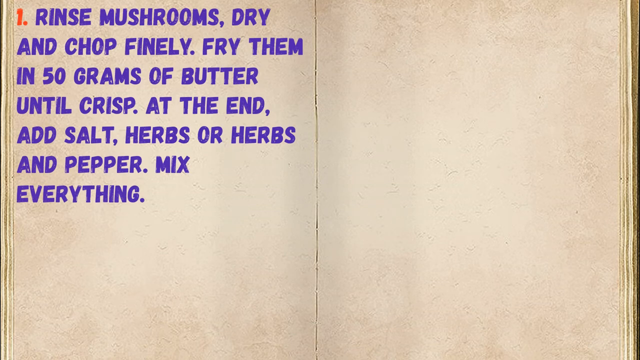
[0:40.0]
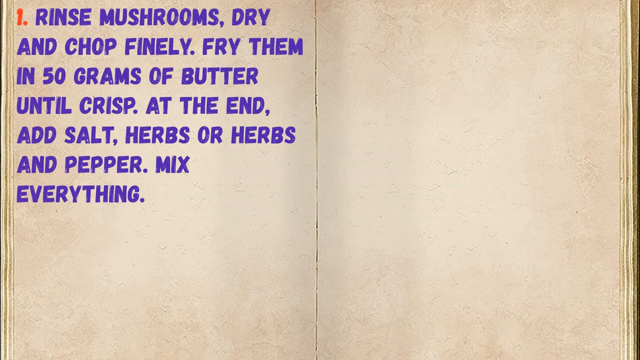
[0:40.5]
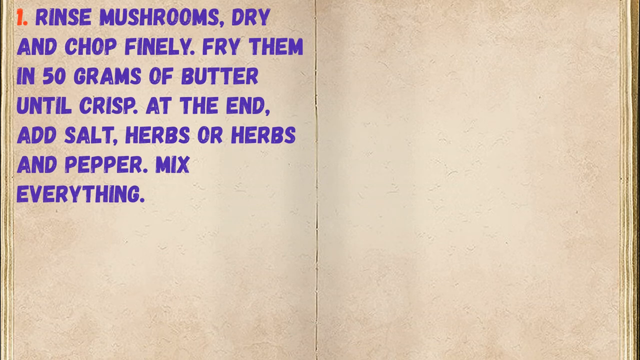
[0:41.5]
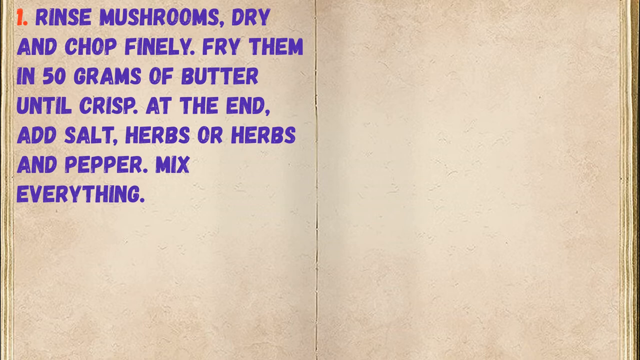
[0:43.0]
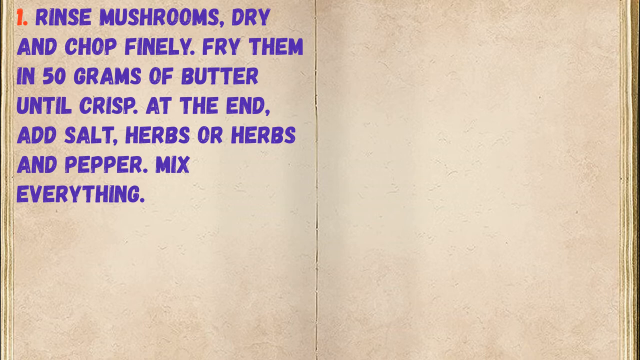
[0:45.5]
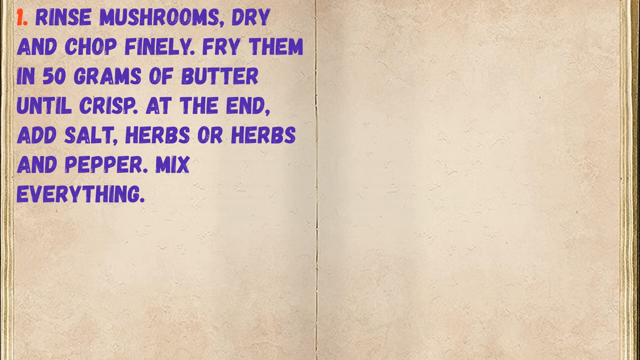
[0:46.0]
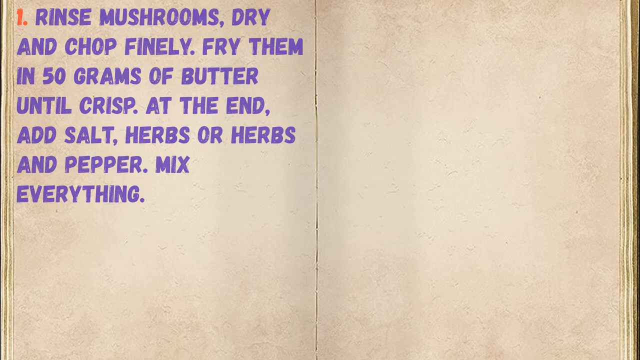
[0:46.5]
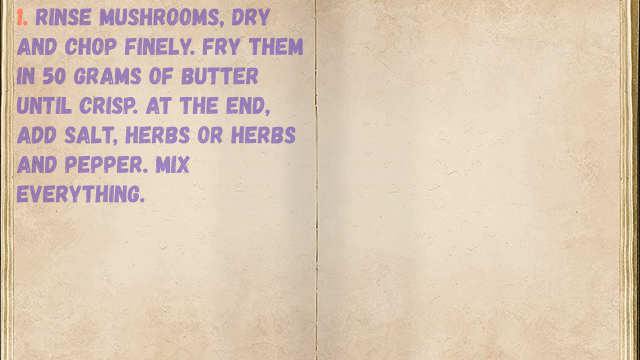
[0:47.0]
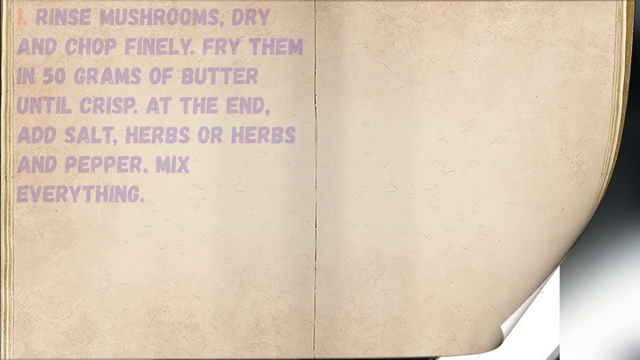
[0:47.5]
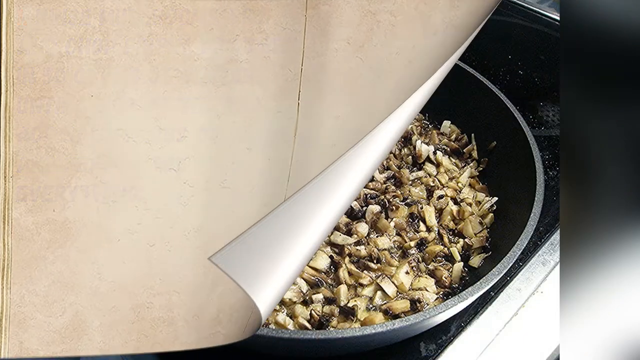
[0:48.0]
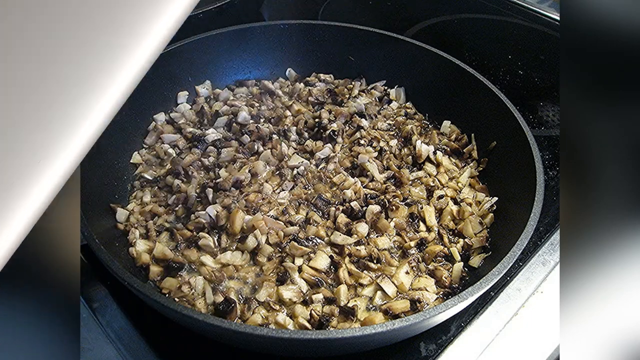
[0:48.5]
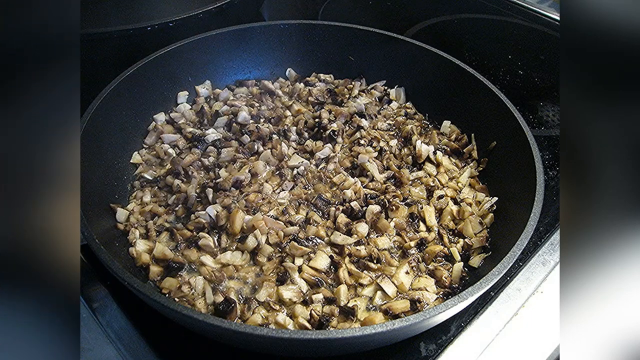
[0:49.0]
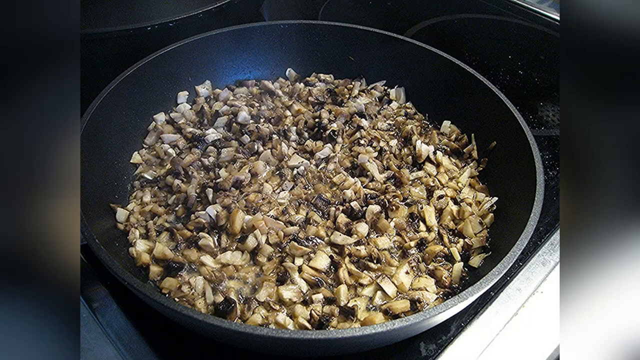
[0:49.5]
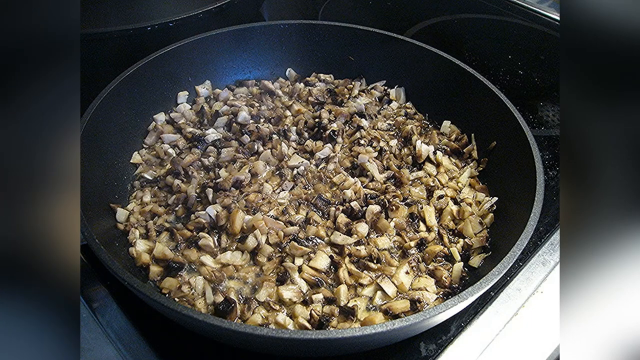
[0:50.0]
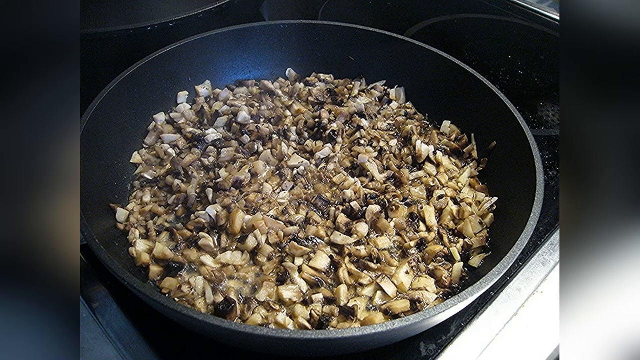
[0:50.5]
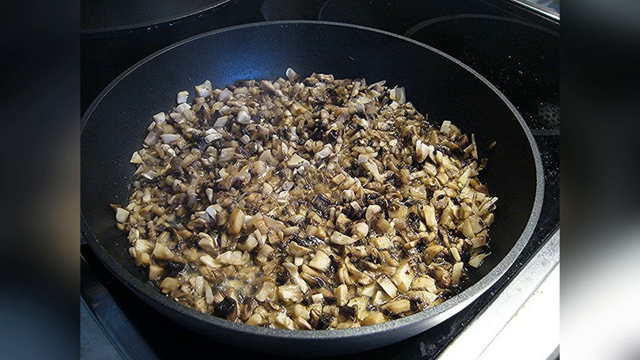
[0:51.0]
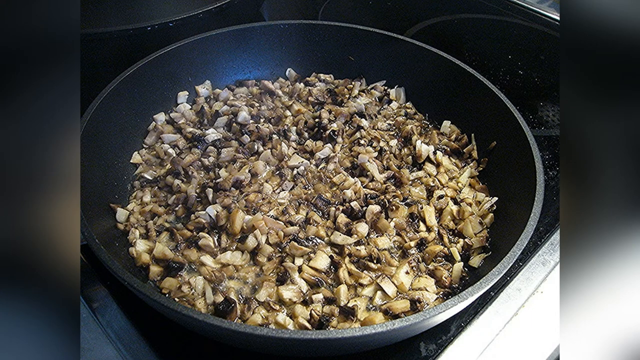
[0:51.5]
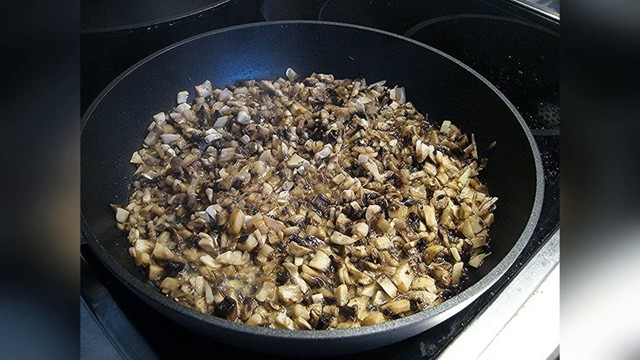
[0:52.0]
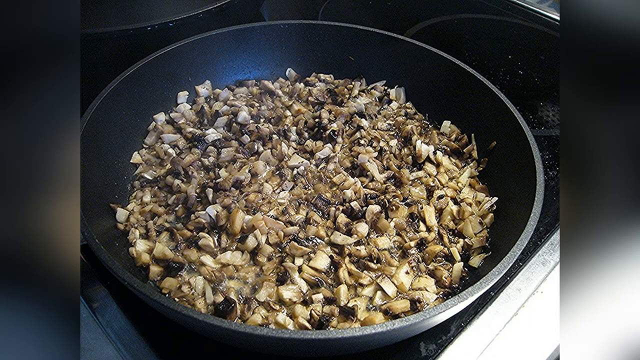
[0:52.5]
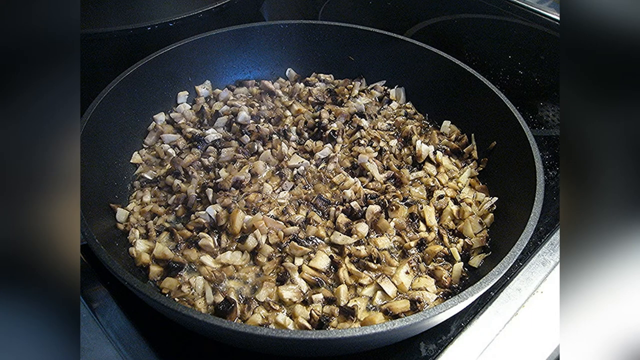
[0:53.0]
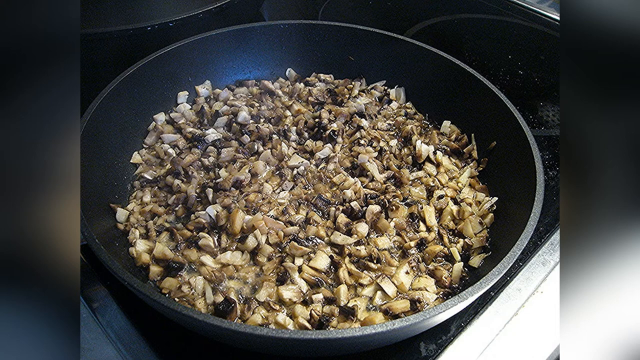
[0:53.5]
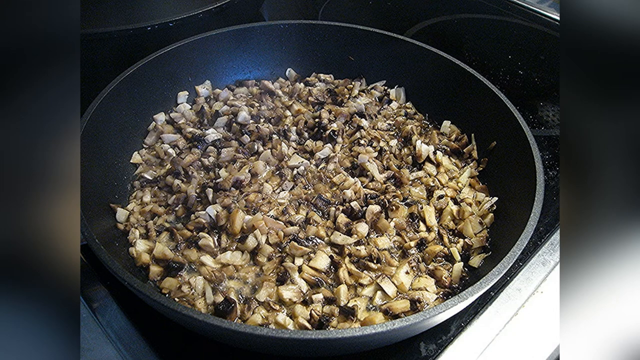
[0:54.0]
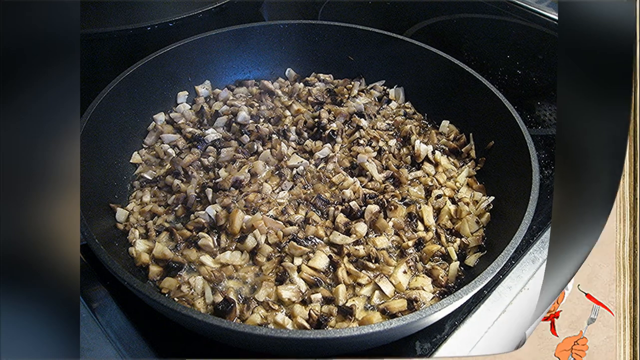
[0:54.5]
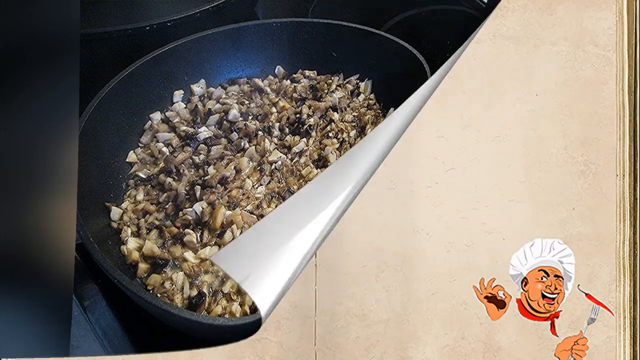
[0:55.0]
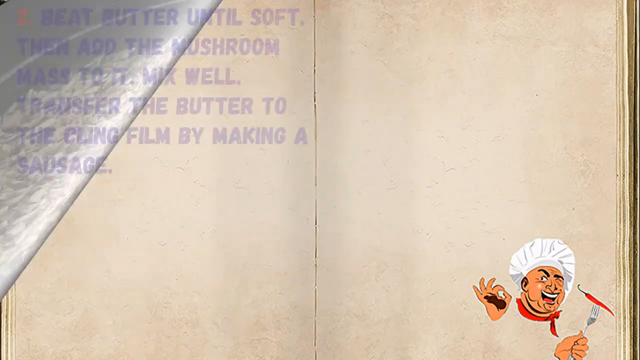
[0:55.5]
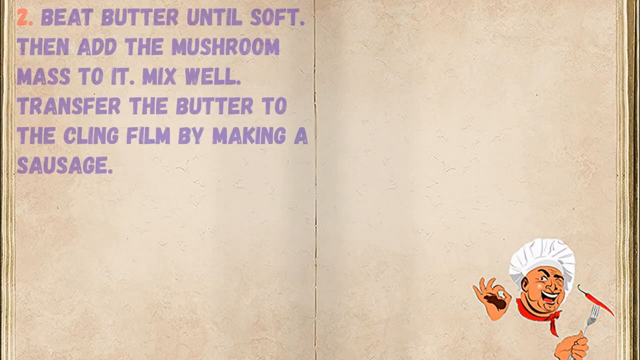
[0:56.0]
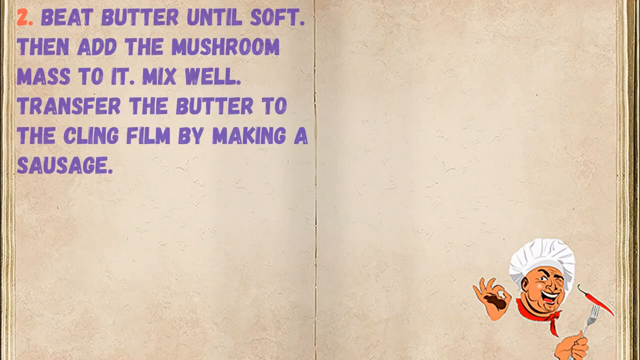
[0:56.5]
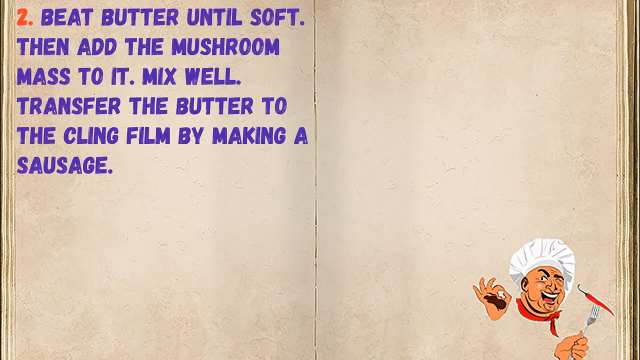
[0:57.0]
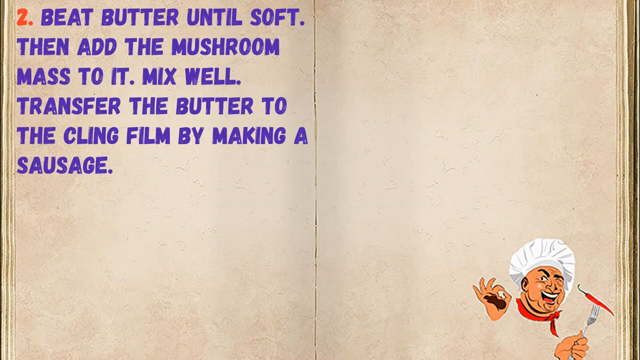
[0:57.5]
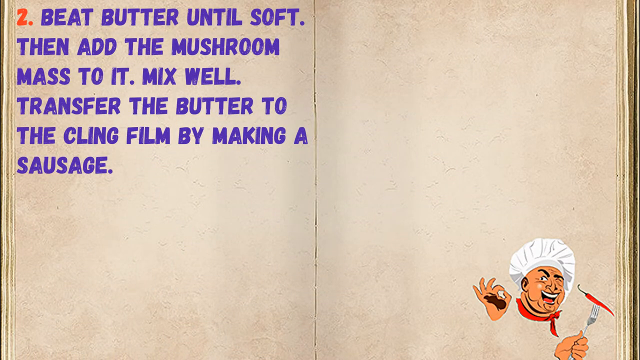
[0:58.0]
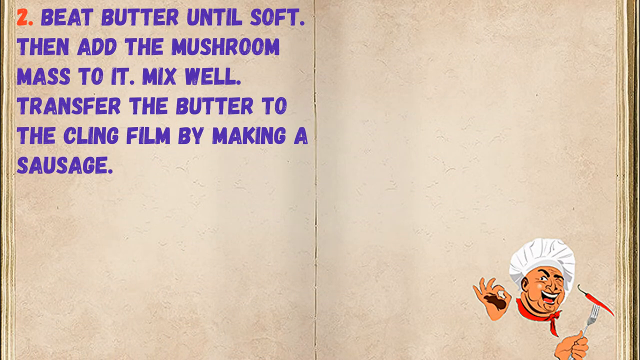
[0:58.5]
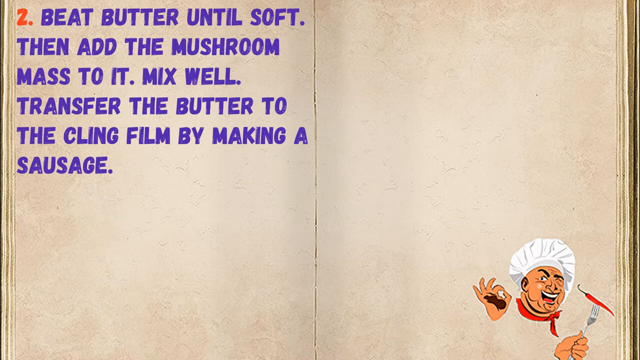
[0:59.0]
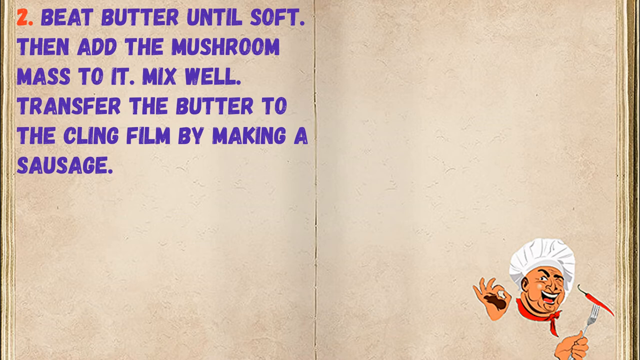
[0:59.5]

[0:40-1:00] Text on the left side reads "1. Rinse mushrooms, dry and chop finely, fry them in 50 grams of butter until crisp. At the end, add salt, herbs, or herbs and pepper. Mix everything." After a transition, a still image shows what looks like a whole pan full of chopped-up mushrooms, presumably being cooked on top of the stove. It then transitions to more cookbook-style text: "2. Beat butter until soft, then add the mushroom mass to it. Mix well. Transfer the butter to the cling film by making a sausage." A small image of a chef wearing a white hat and holding a fork with a pepper on it is in the bottom right corner.